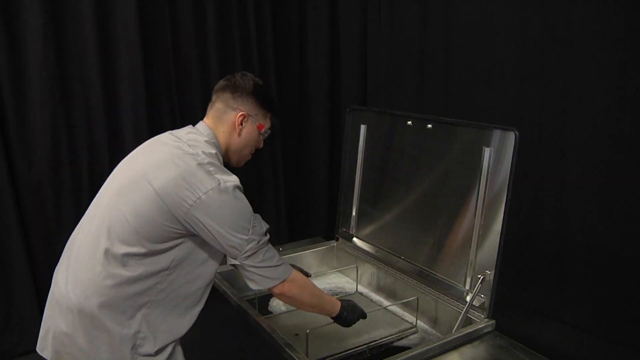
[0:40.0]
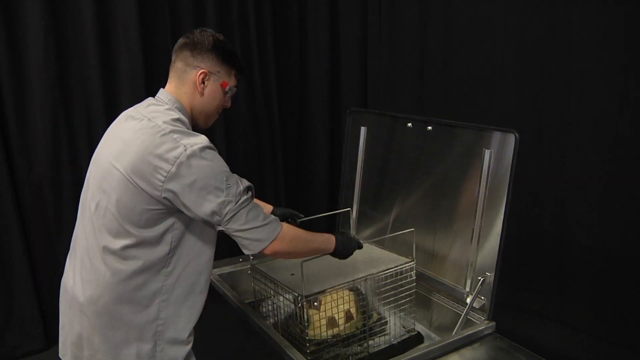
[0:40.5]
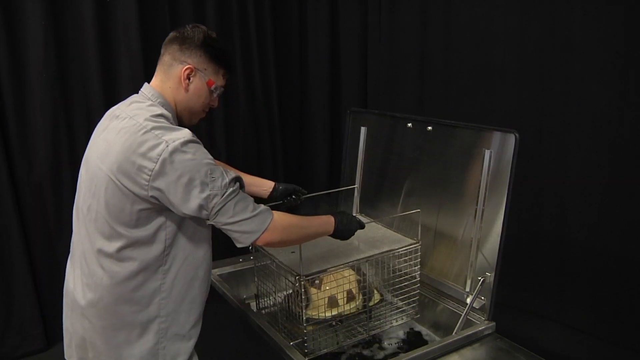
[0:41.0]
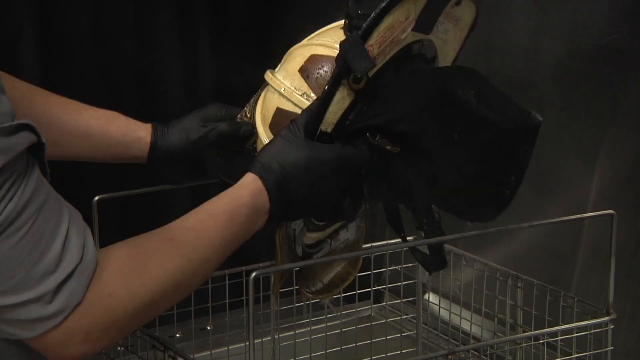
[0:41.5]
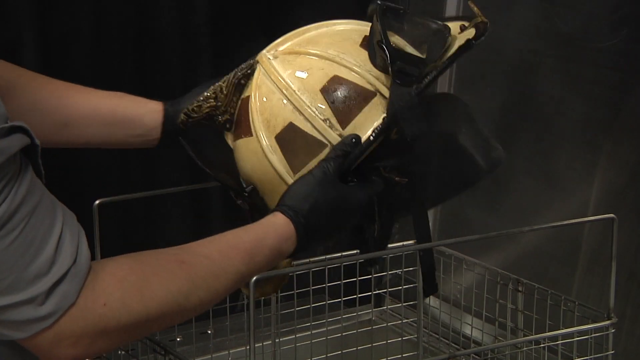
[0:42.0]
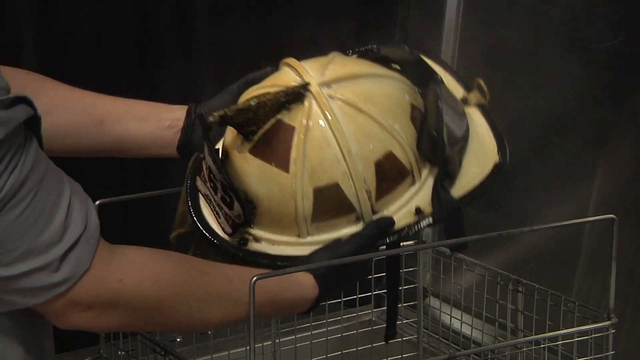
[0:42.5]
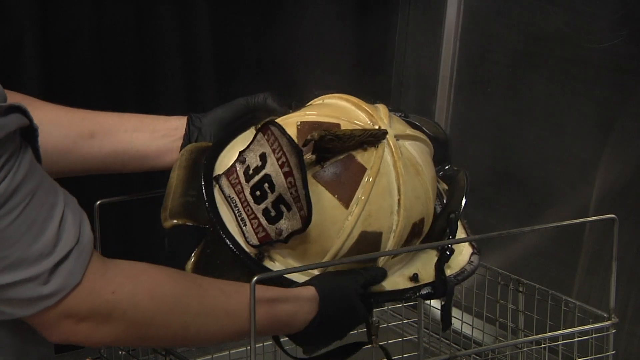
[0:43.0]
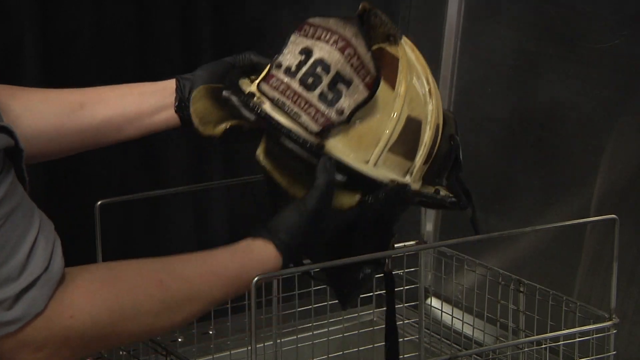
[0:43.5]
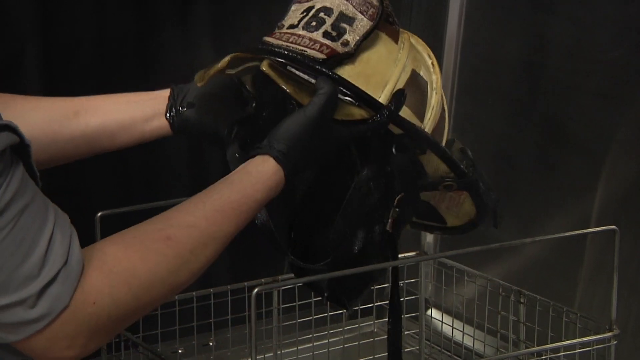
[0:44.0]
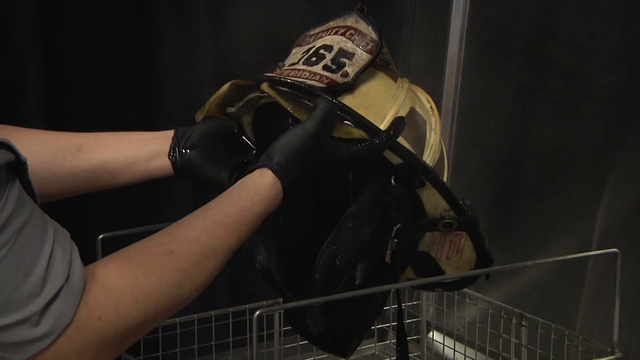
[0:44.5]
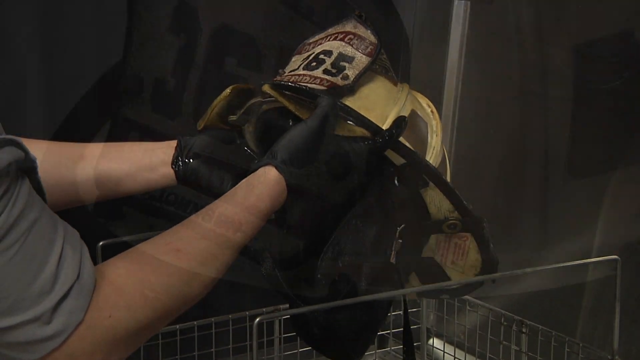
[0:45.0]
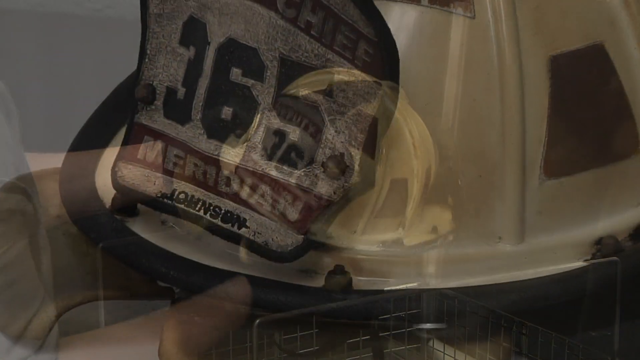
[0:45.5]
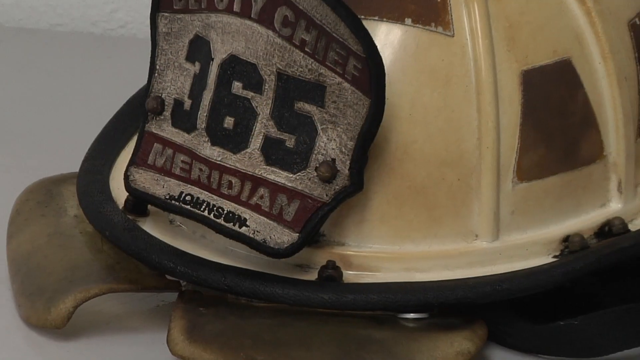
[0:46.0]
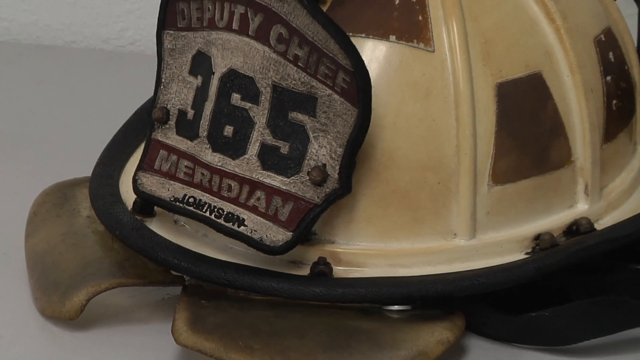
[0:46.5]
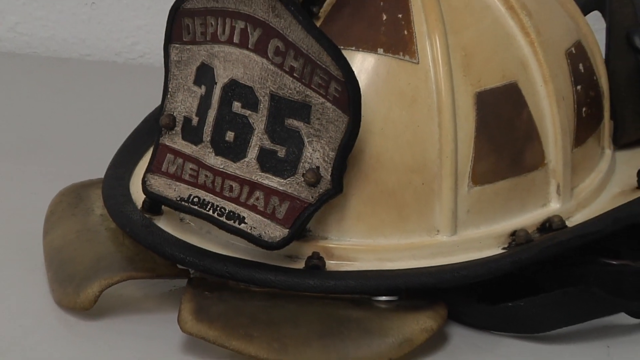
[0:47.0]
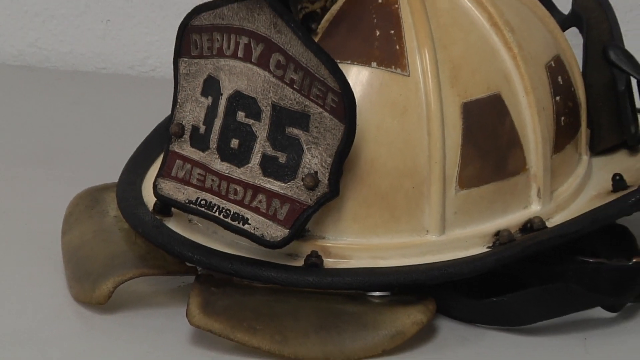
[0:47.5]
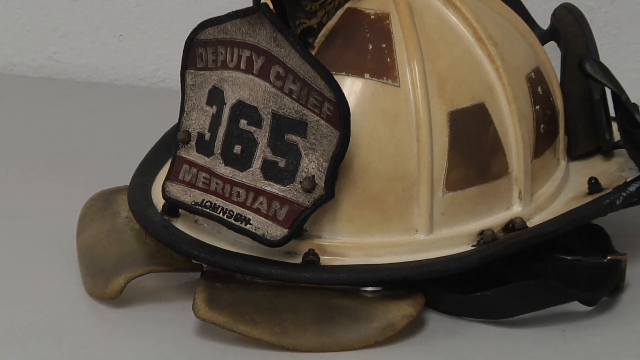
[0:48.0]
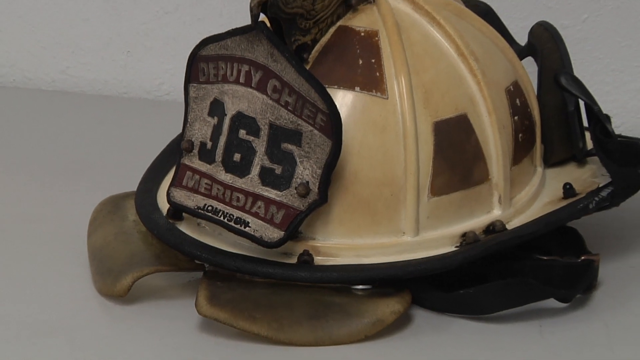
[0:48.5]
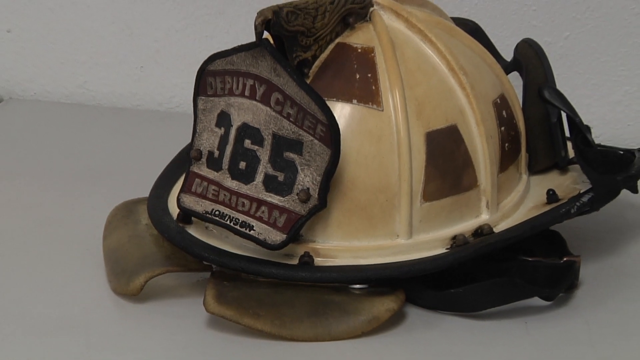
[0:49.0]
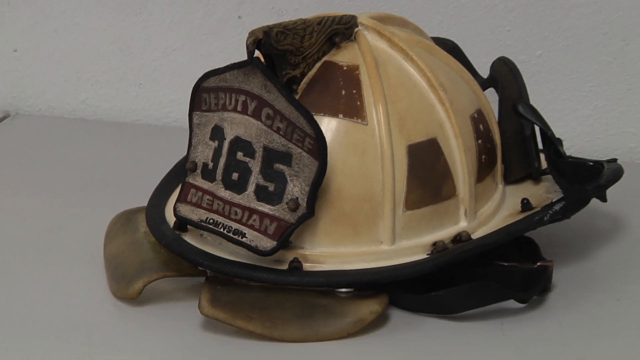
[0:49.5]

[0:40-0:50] A man in a gray work shirt, wearing black gloves and safety glasses, stands in front of a stainless steel rectangular box with a hinged lid. The box is full of a bubbling liquid, and the man uses both hands to remove a metal wire cage from it. He then removes the formerly dirty, smoke-covered yellow firefighter's helmet from the wire cage; it is now clean after being immersed in the bubbling liquid. A closer shot of the helmet sitting on a white counter shows the smoke removed, and the text "Deputy Chief Meridian" and the number "365" are now clearly legible on the helmet.